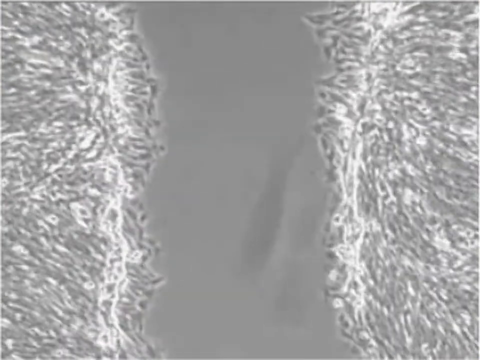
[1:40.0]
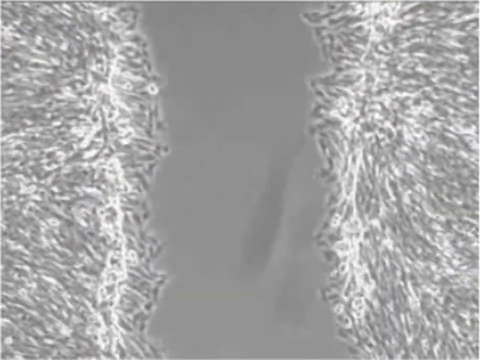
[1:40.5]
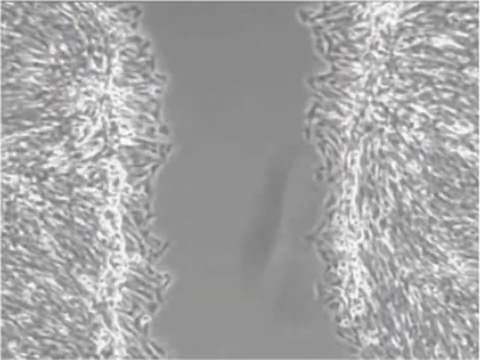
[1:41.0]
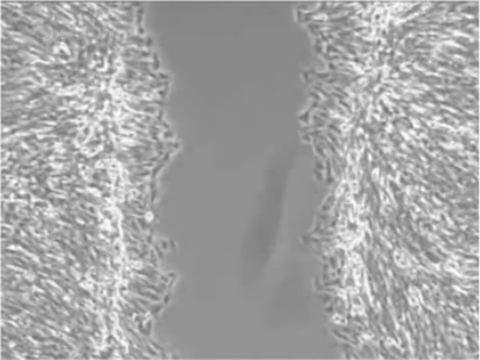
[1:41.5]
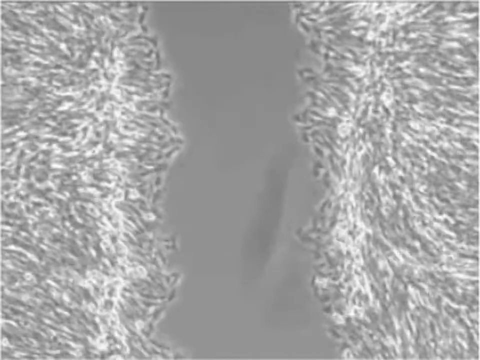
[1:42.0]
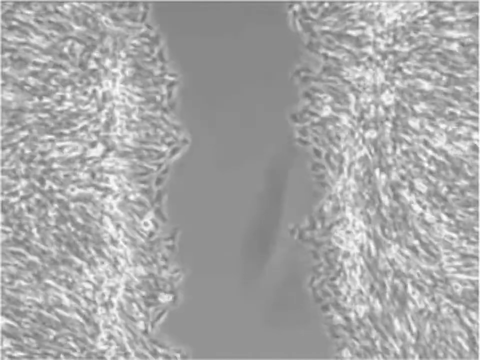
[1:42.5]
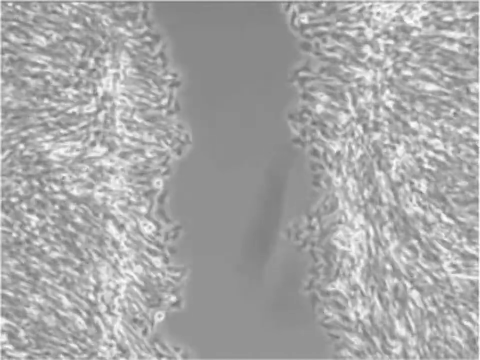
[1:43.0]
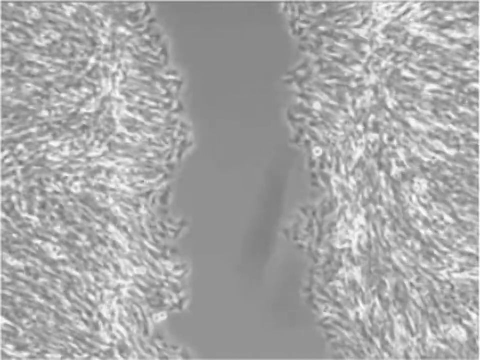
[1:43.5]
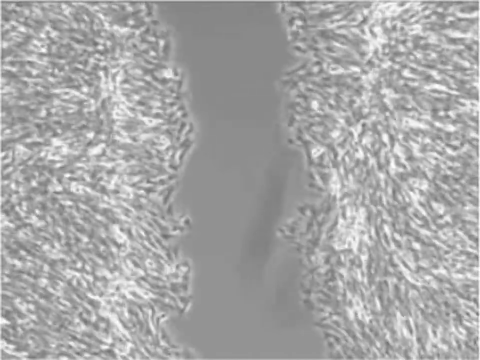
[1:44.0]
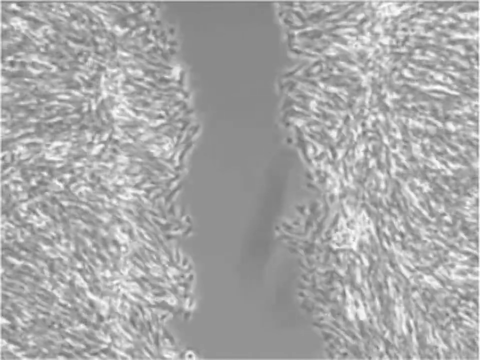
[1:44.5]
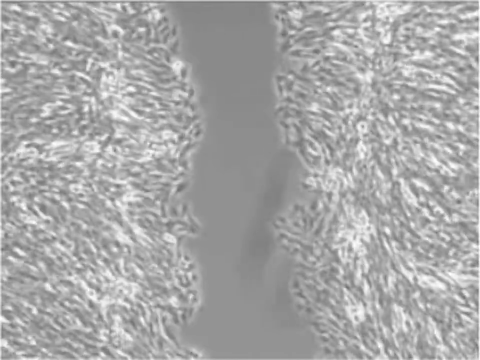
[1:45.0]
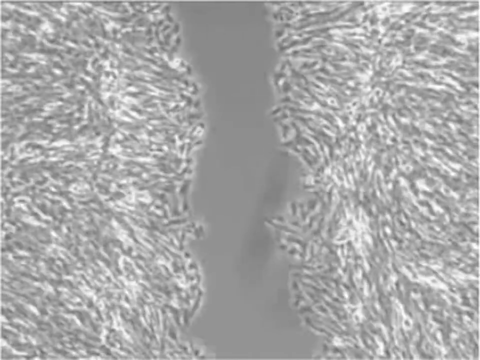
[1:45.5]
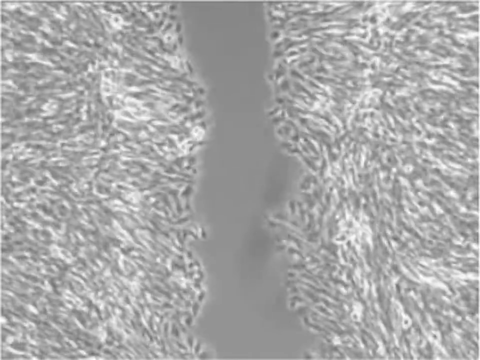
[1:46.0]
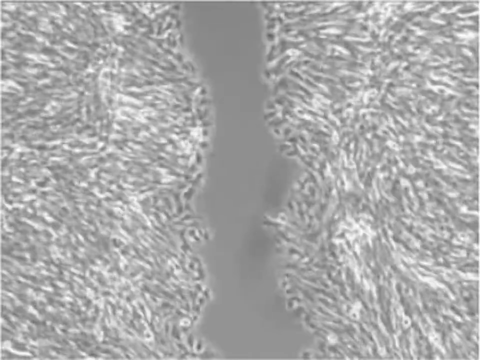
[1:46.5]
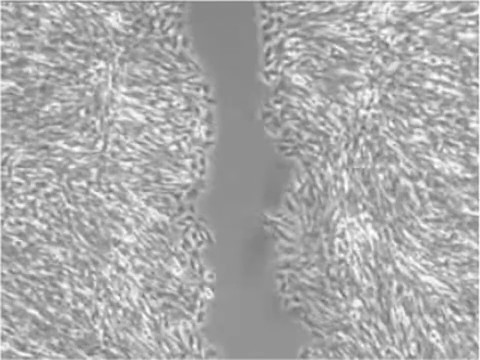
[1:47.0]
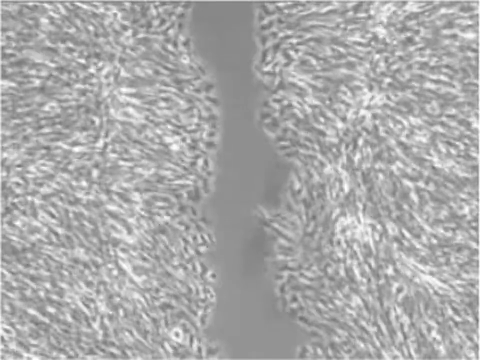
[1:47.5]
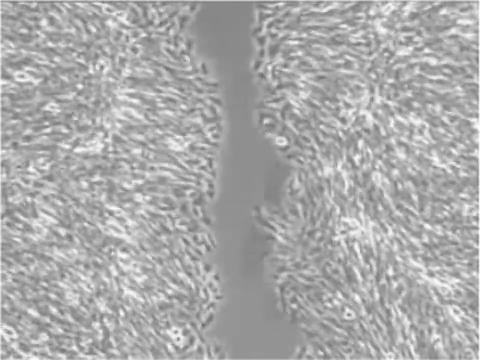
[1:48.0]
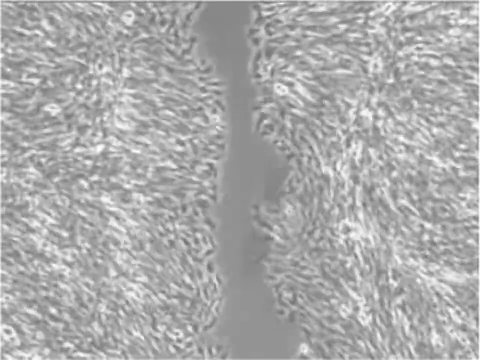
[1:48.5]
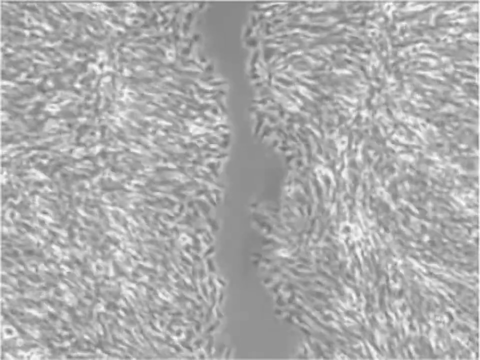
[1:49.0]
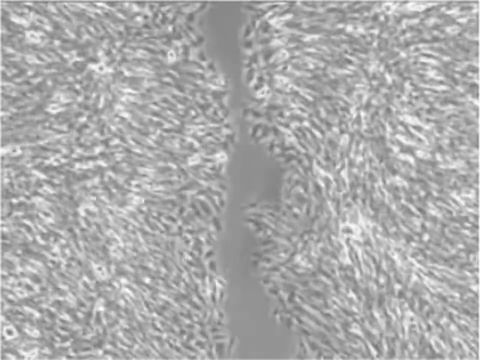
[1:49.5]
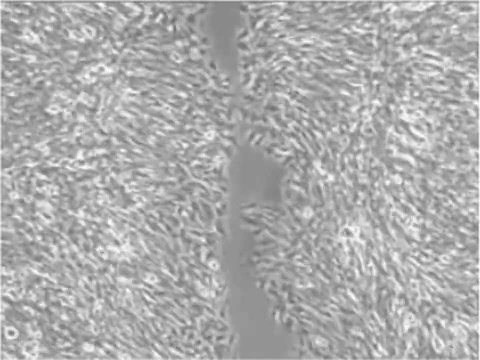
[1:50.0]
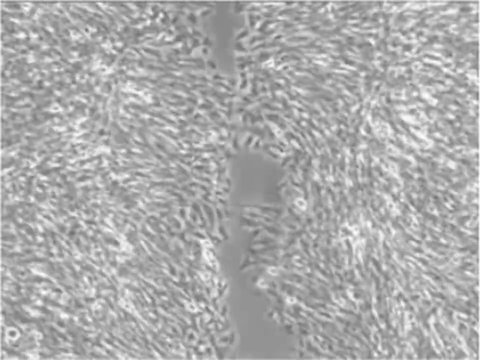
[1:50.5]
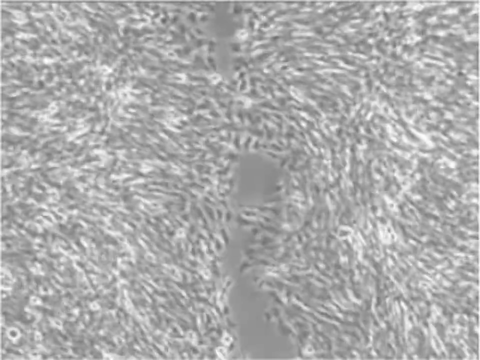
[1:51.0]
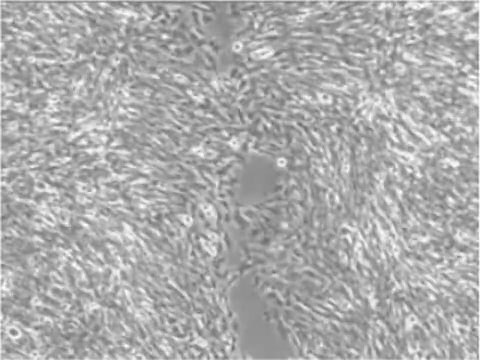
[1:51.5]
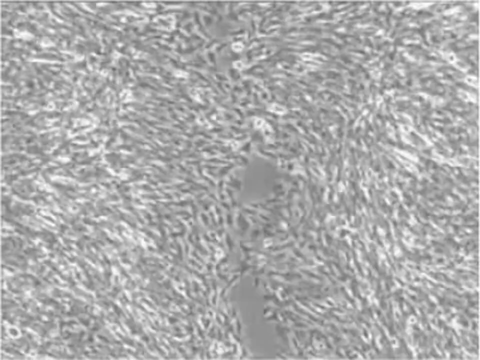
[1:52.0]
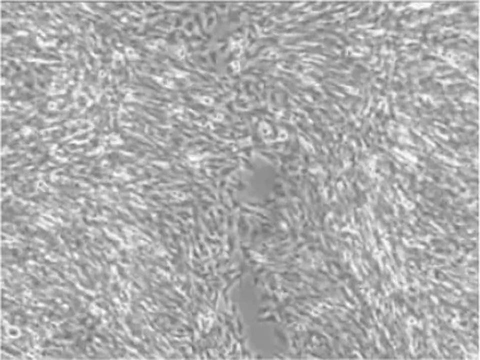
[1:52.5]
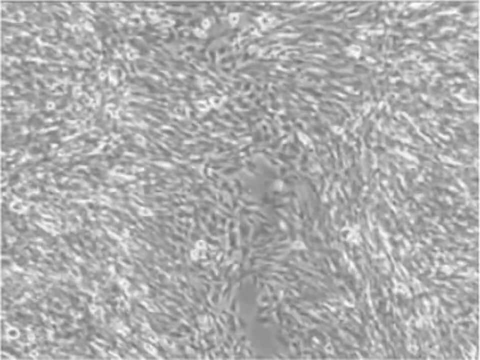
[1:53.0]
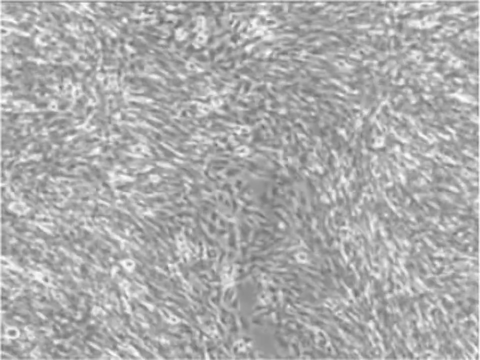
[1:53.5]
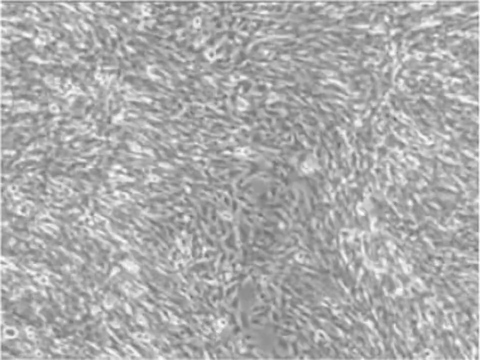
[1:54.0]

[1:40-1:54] A view through a microscope shows cells multiplying and refilling the scratched area where cells were removed from the Petri dish. The process is very fast, apparently in real time rather than sped up; within just a few seconds the entire scratch is basically refilled. Unlike the round blue cells in the diagram, the cells under the microscope are not circular; they almost look like little tadpoles or stringy spaghetti.